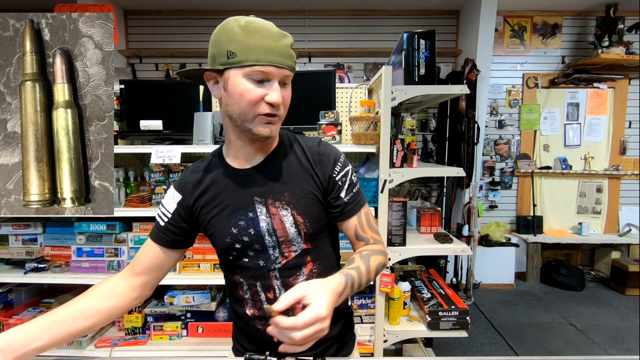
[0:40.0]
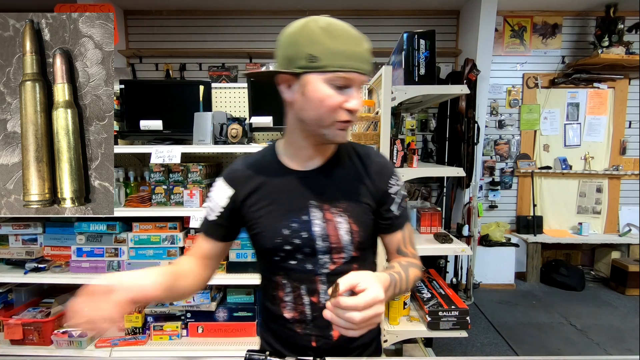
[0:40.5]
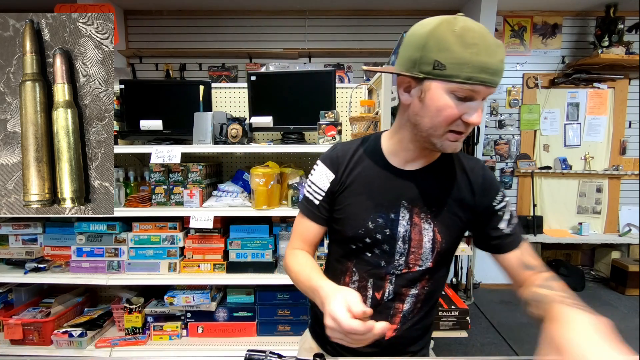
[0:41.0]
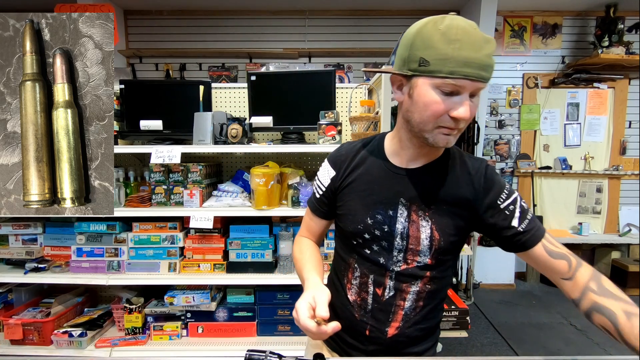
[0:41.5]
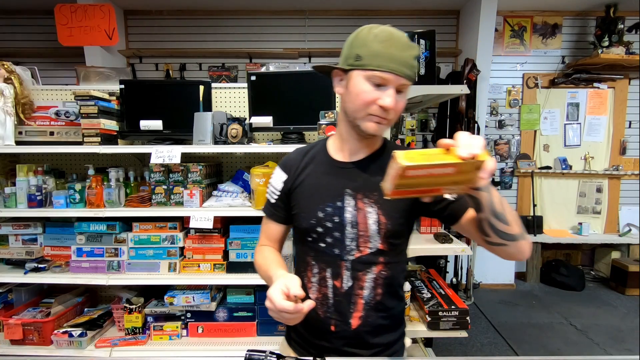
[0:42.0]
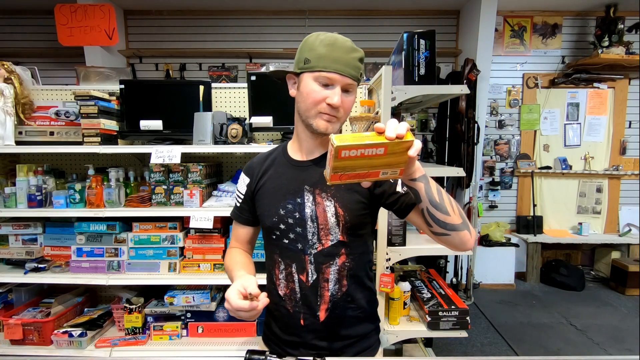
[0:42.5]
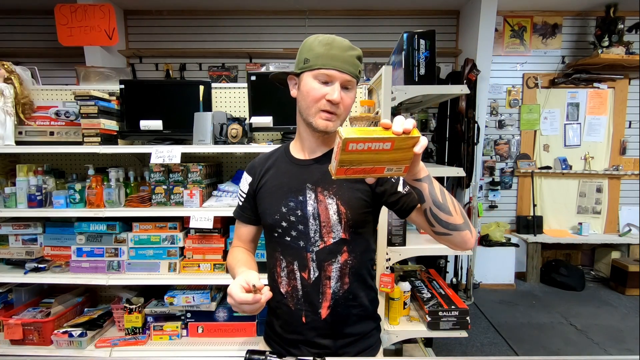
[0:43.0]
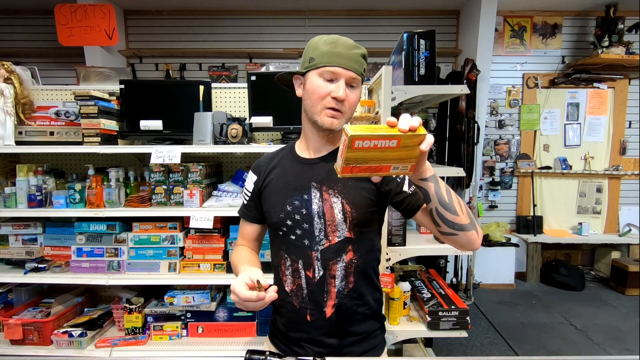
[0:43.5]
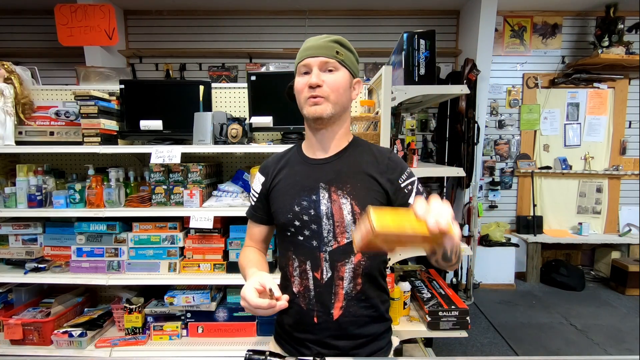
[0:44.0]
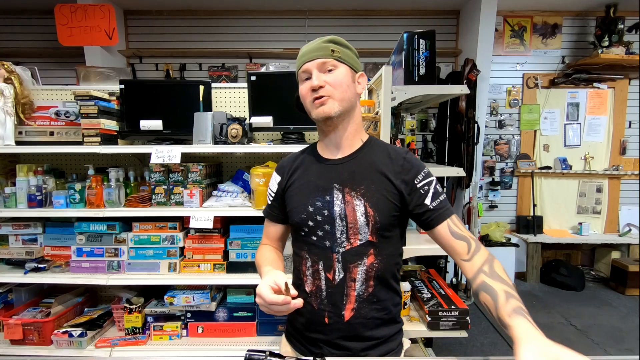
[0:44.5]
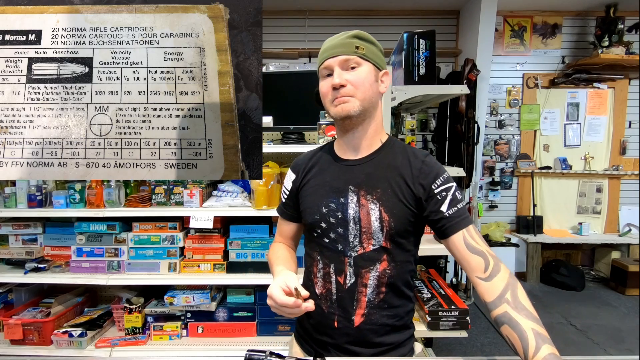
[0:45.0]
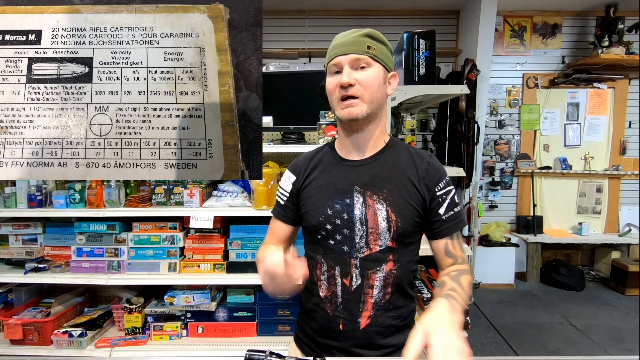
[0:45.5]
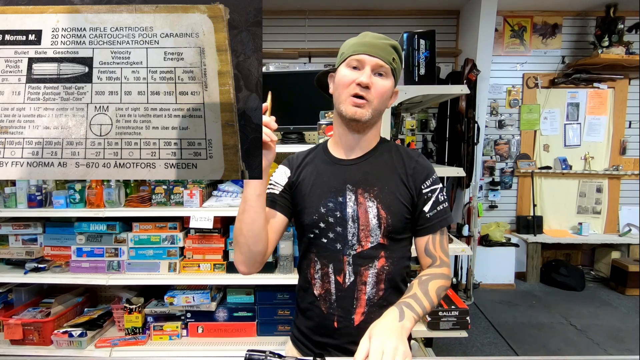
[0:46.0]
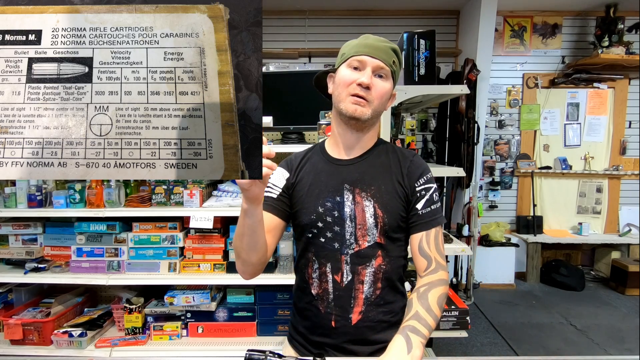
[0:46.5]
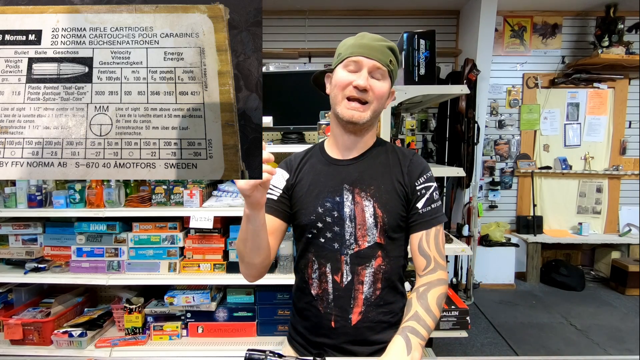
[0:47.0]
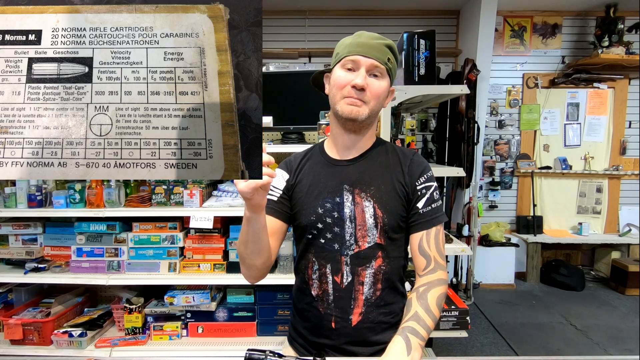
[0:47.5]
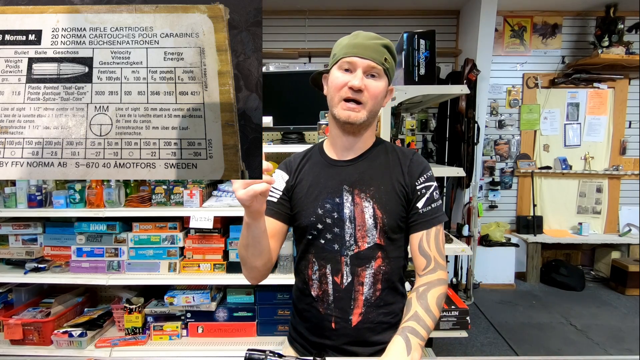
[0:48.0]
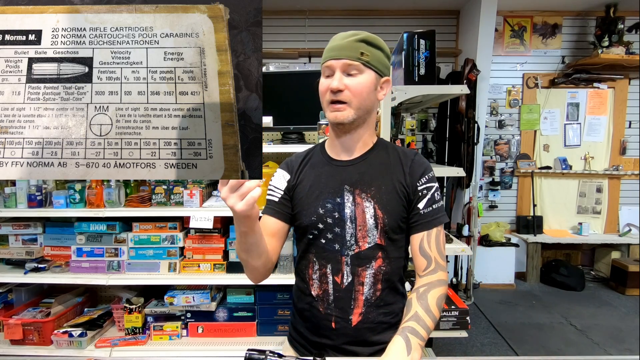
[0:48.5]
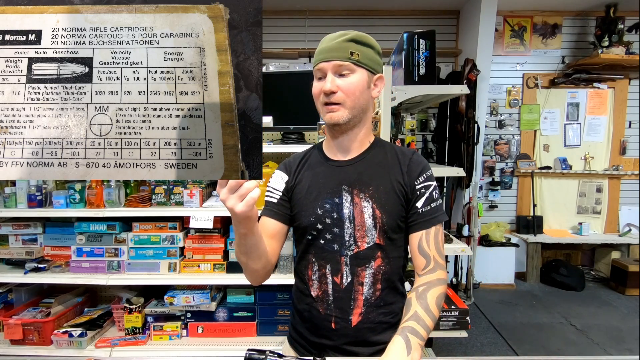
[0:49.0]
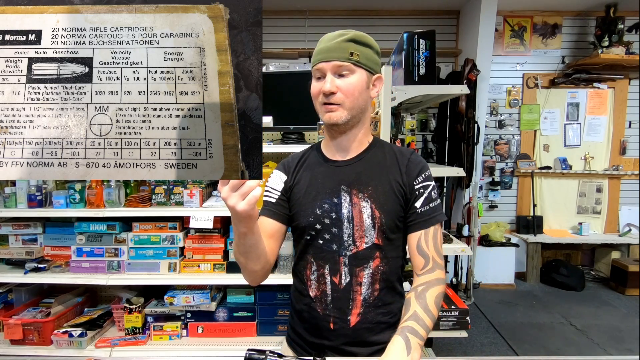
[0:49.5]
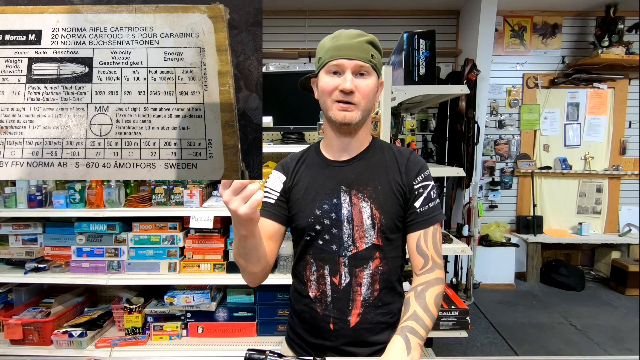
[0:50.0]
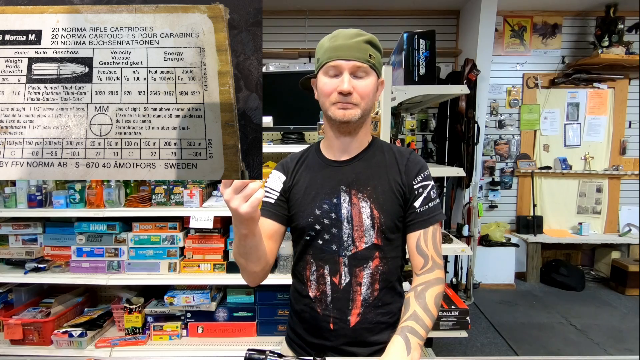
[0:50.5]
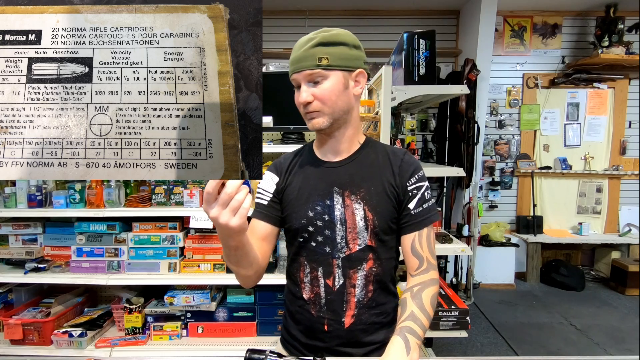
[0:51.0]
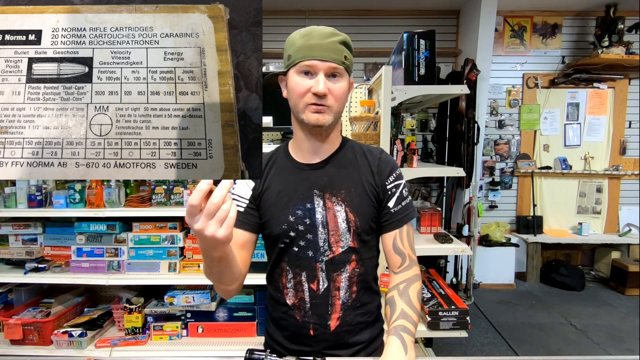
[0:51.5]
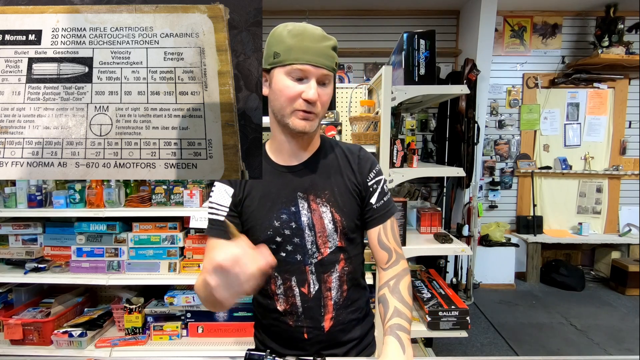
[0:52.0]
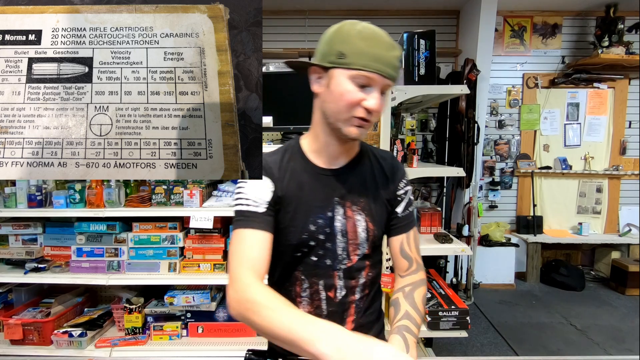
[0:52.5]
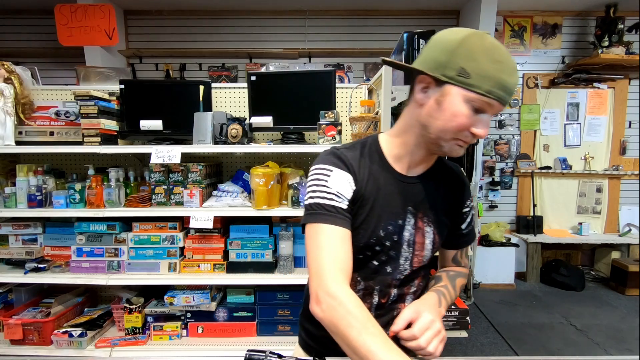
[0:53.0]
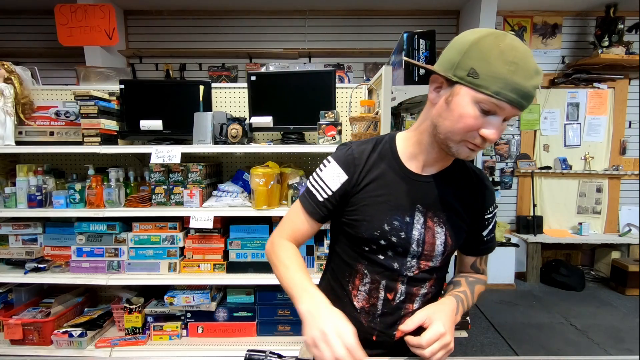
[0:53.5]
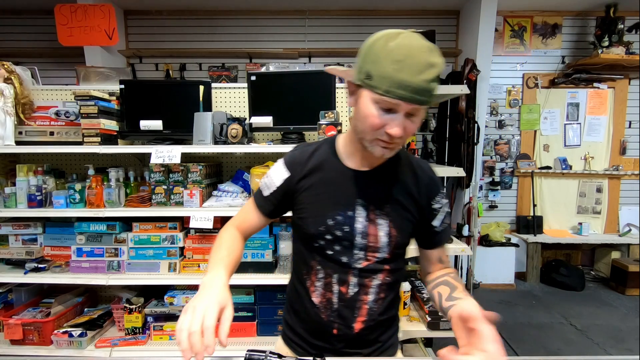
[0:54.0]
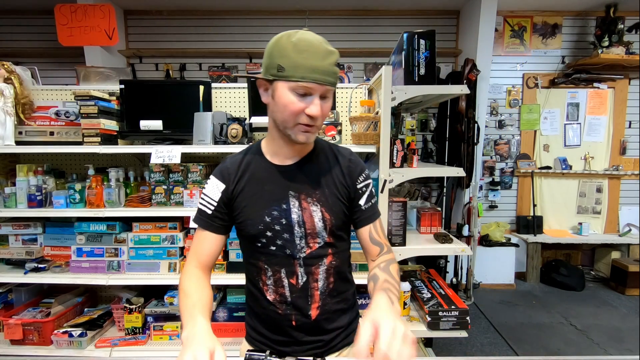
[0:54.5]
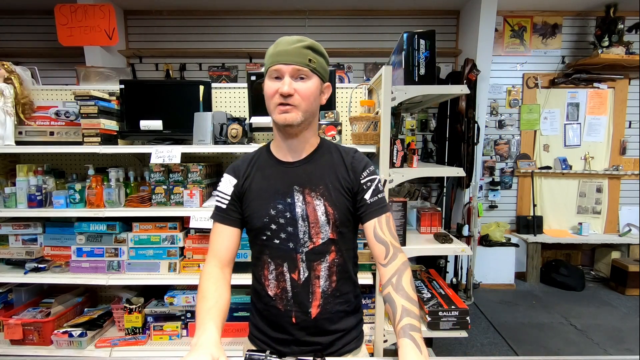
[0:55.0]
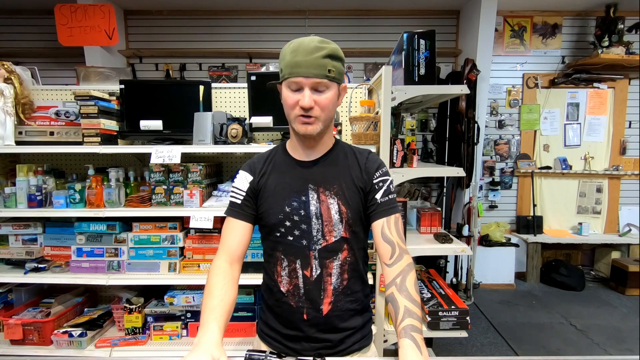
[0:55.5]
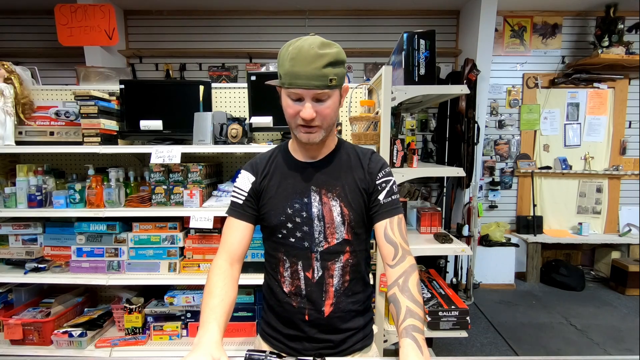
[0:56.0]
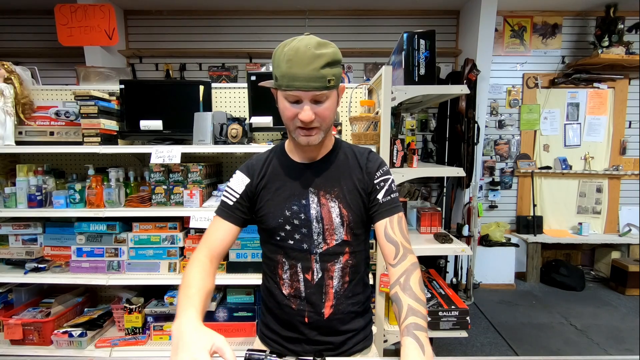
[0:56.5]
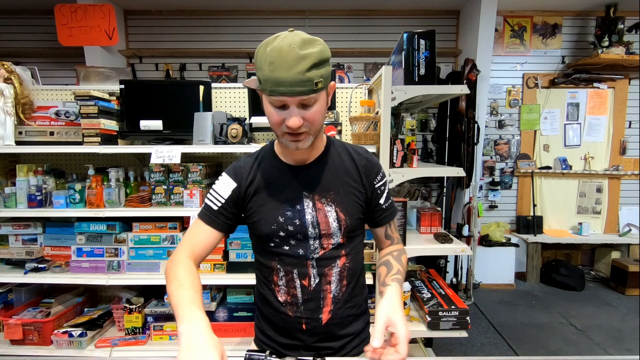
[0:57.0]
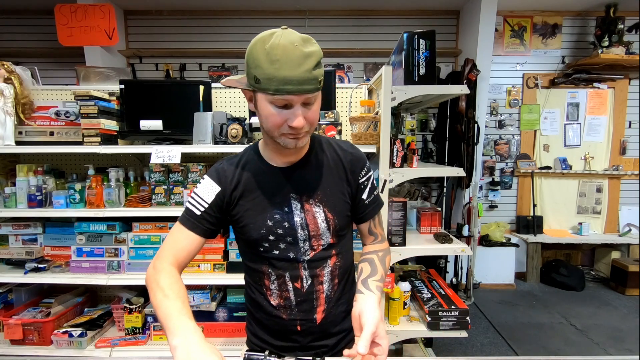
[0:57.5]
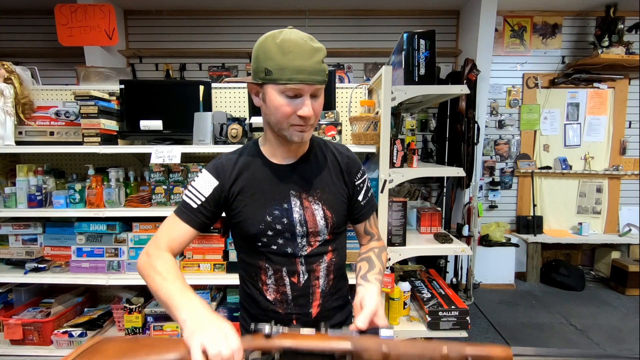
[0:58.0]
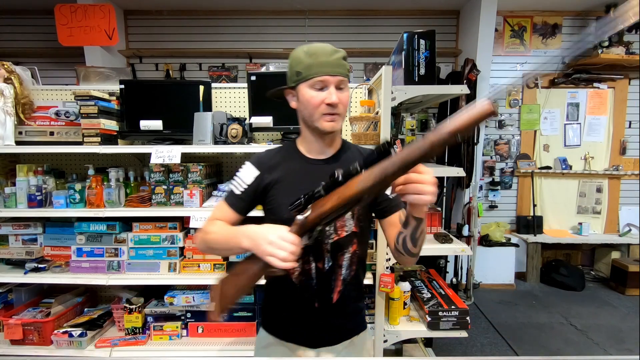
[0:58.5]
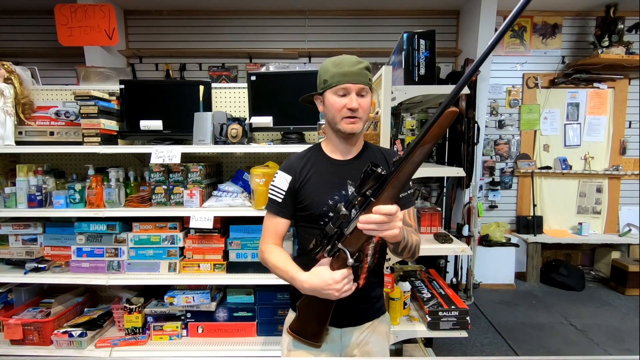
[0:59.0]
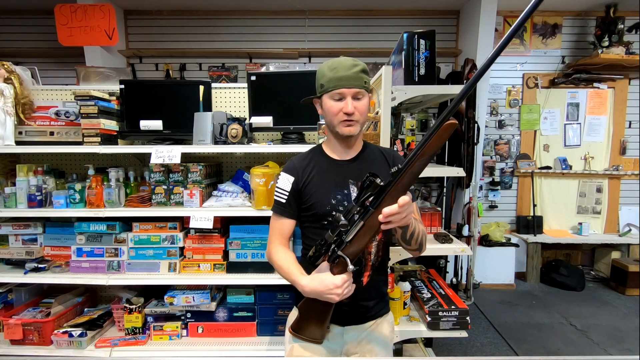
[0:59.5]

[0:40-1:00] A man stands in what appears to be a store, perhaps an antique or second-hand store, with a large collection of items that fit a number of different categories. The camera is focused on the man, who wears a black t-shirt with a helmet on it painted in the colours of the American flag, and a green cap on backwards. In the top left-hand corner is a small box showing two bullets. Behind him are a number of shelves filled with different items: one shelf has a number of jigsaw puzzles of a thousand pieces or so stacked up, the shelf above has boxes containing other items, and the top shelf has some obsolete technologies including cassette tapes. The man picks up a box with the word "Norma" on it and looks at it before placing it down, and the top left corner shows the back of the box, which is 20 Norma rifle cartridges.